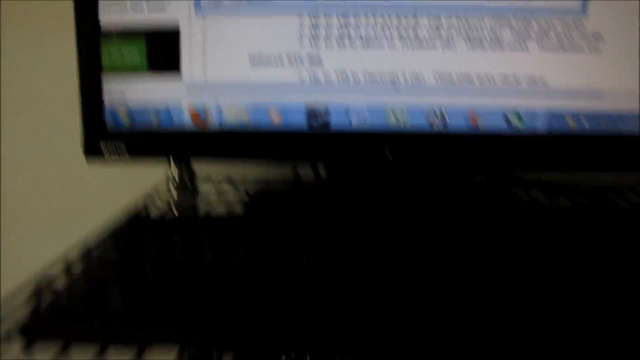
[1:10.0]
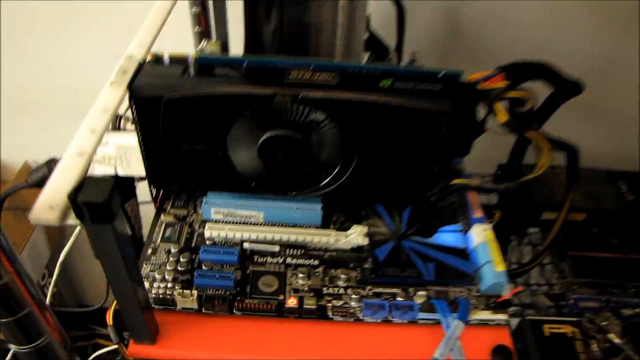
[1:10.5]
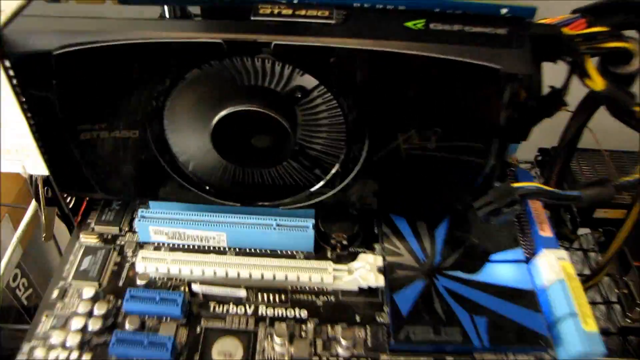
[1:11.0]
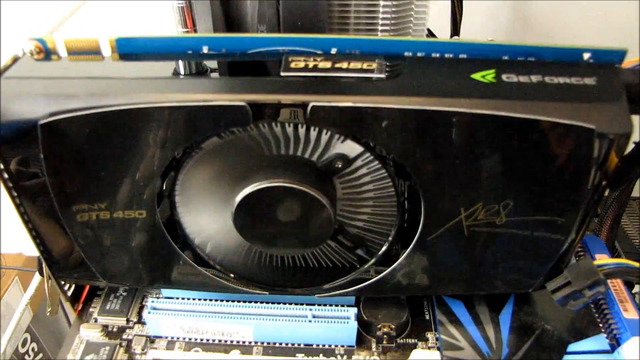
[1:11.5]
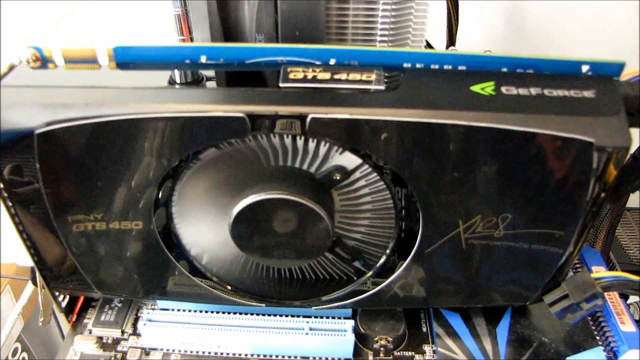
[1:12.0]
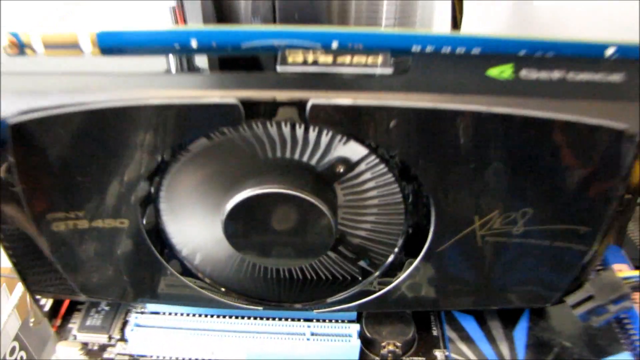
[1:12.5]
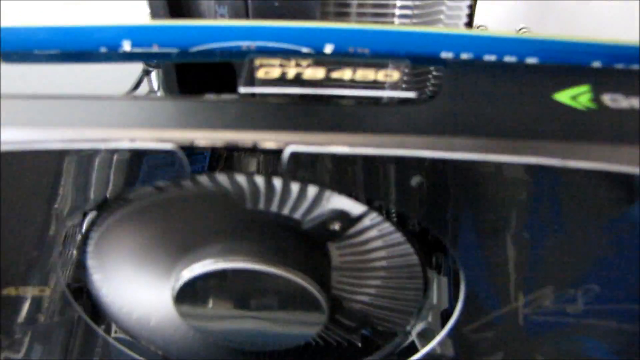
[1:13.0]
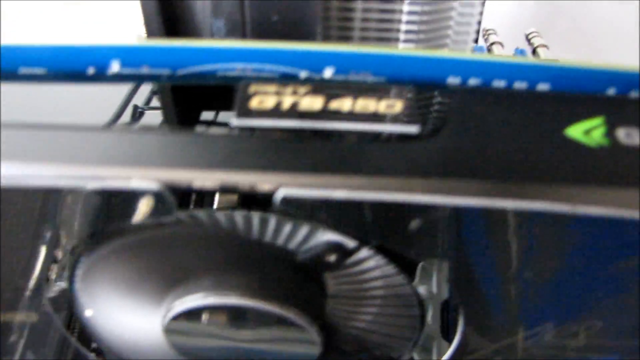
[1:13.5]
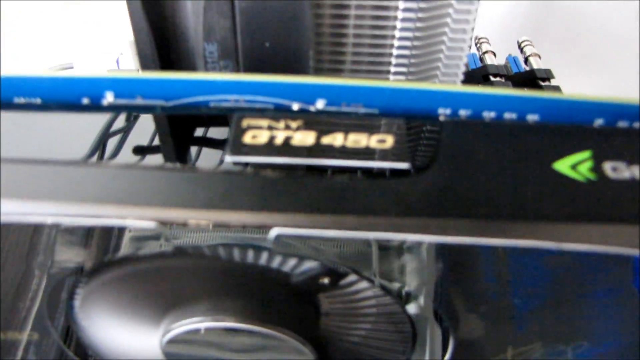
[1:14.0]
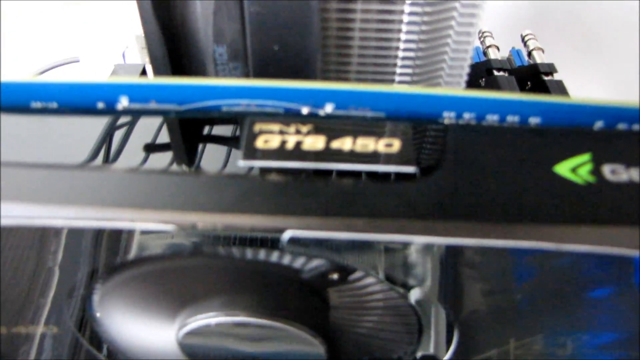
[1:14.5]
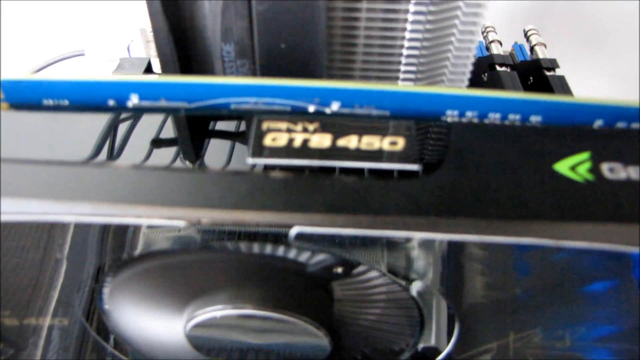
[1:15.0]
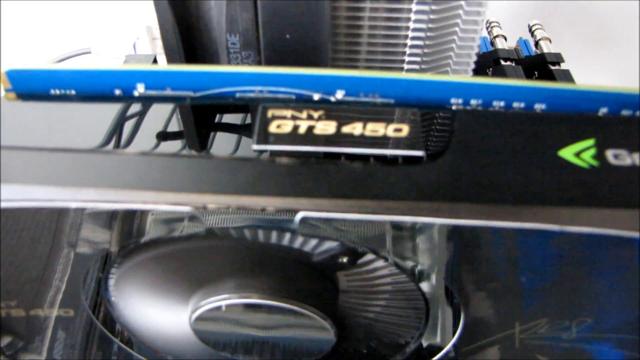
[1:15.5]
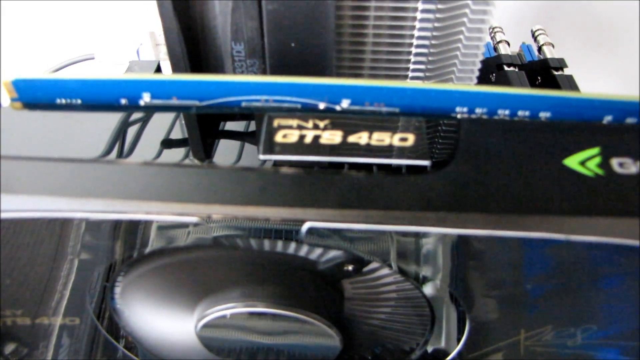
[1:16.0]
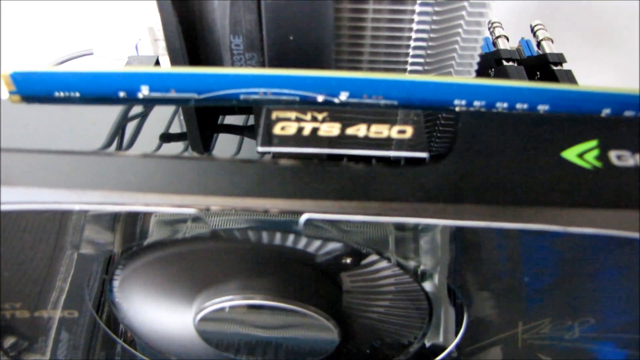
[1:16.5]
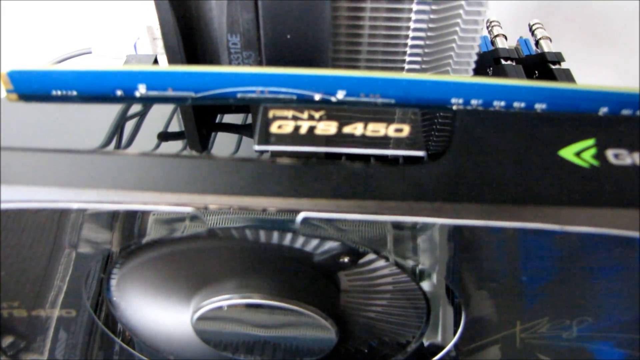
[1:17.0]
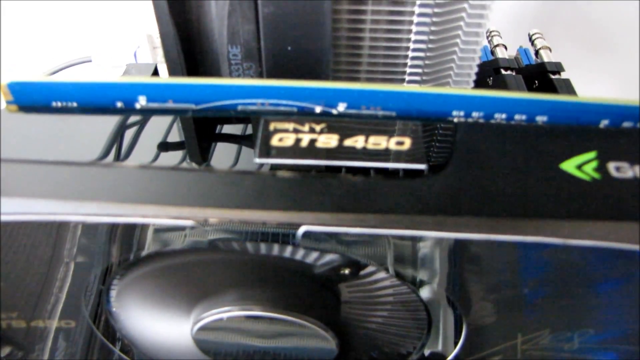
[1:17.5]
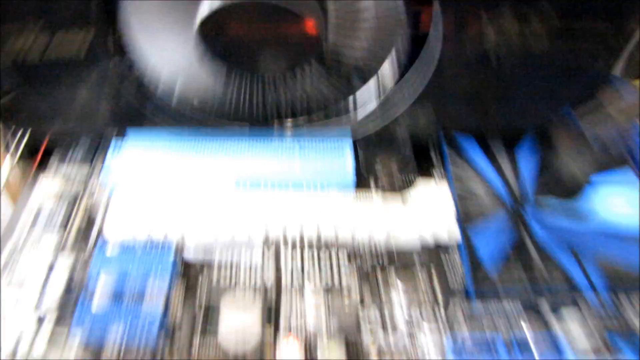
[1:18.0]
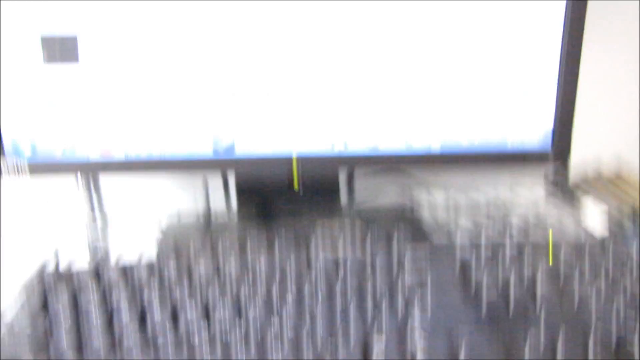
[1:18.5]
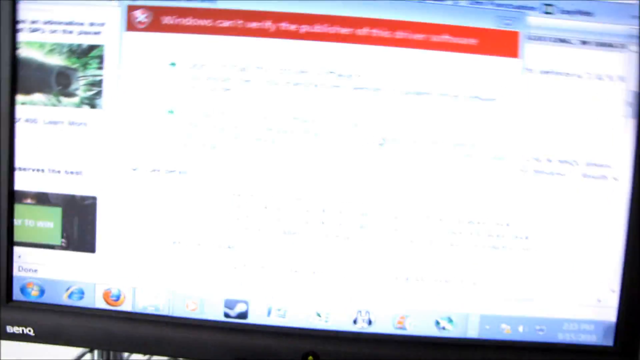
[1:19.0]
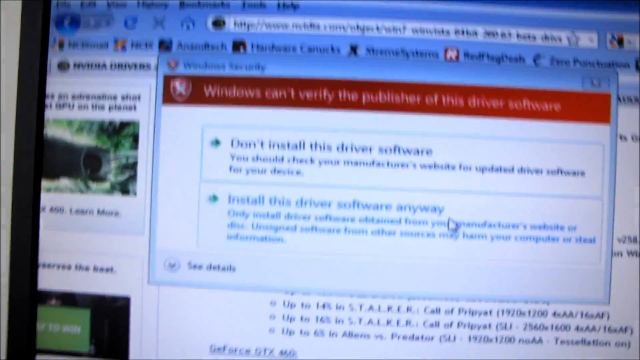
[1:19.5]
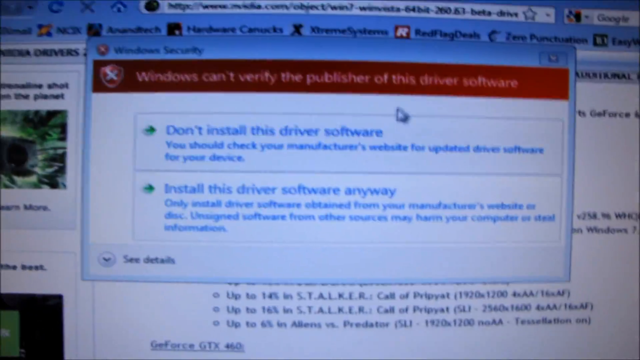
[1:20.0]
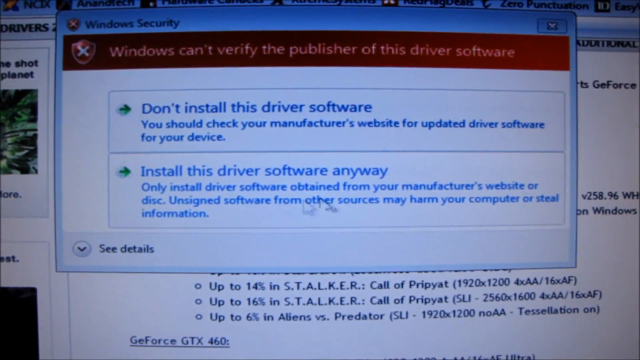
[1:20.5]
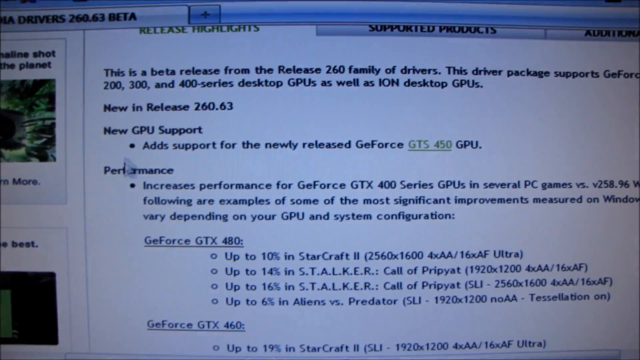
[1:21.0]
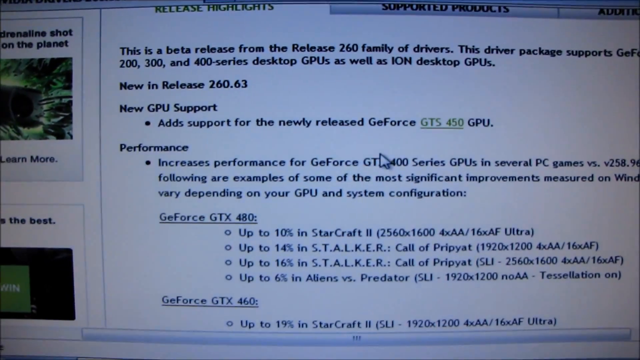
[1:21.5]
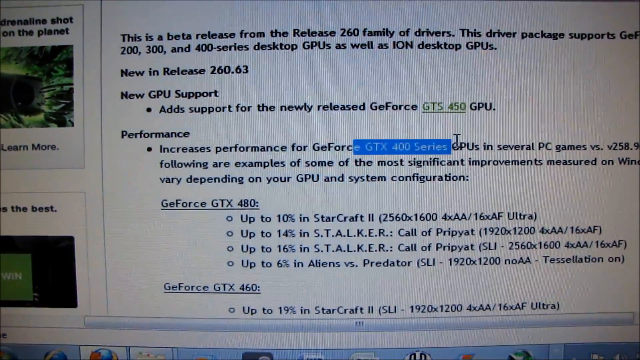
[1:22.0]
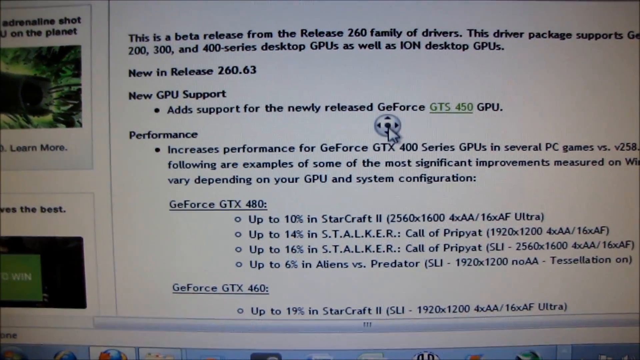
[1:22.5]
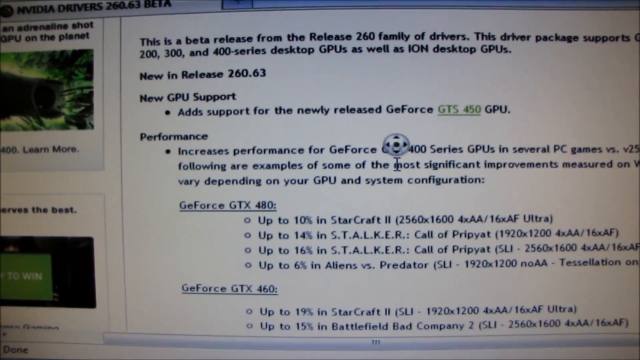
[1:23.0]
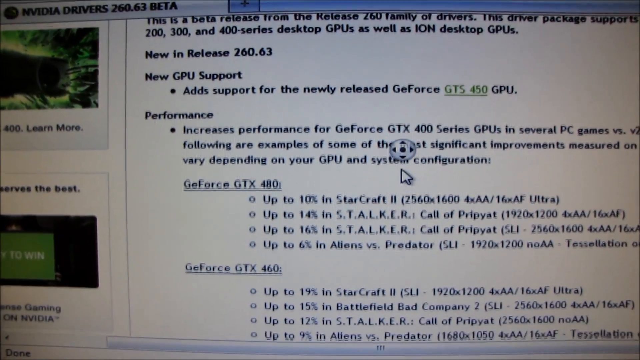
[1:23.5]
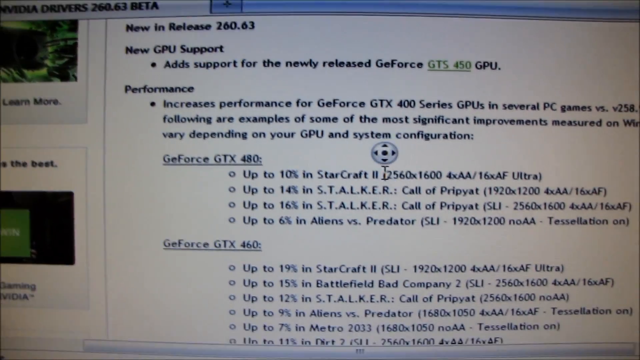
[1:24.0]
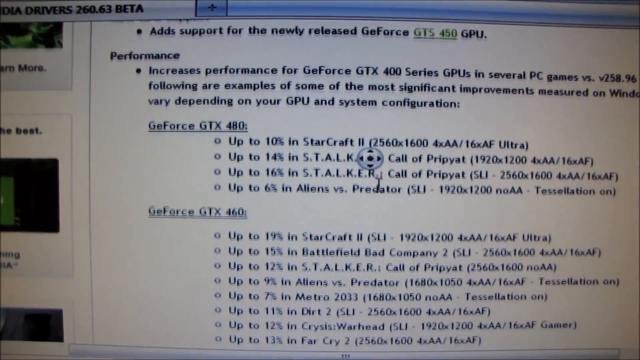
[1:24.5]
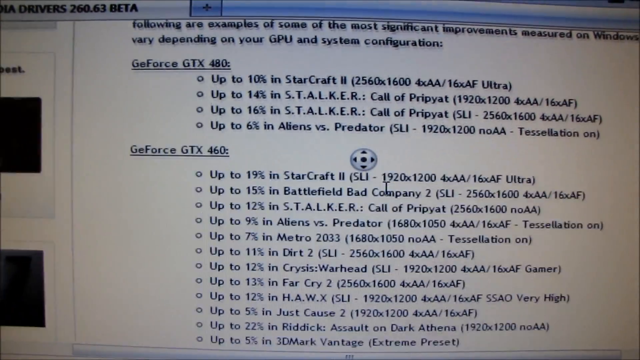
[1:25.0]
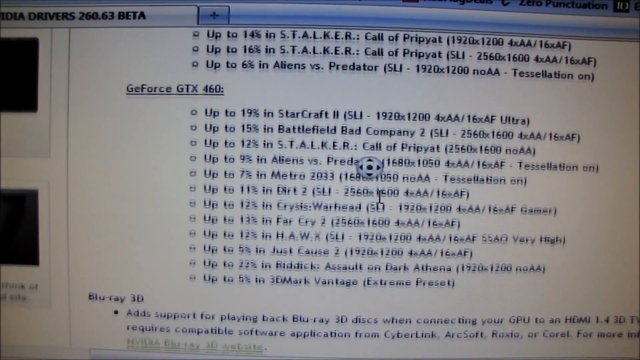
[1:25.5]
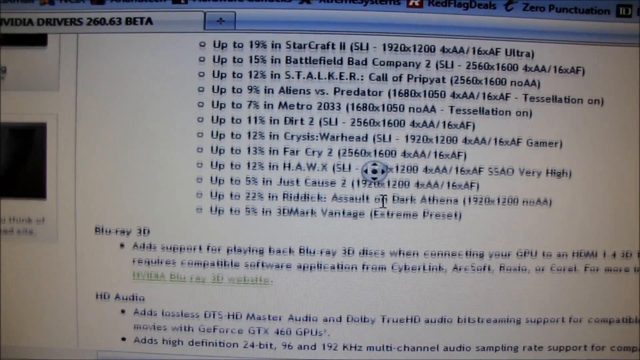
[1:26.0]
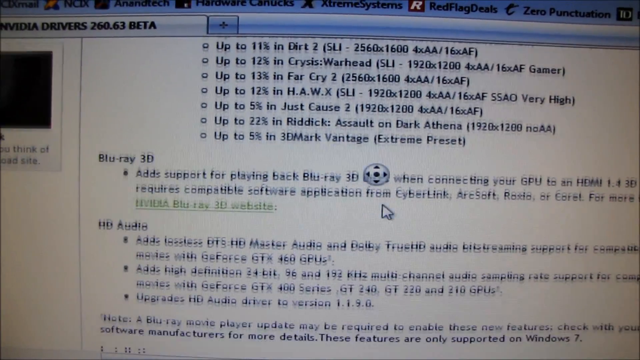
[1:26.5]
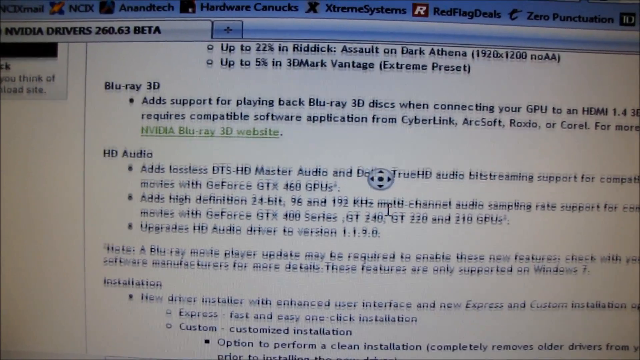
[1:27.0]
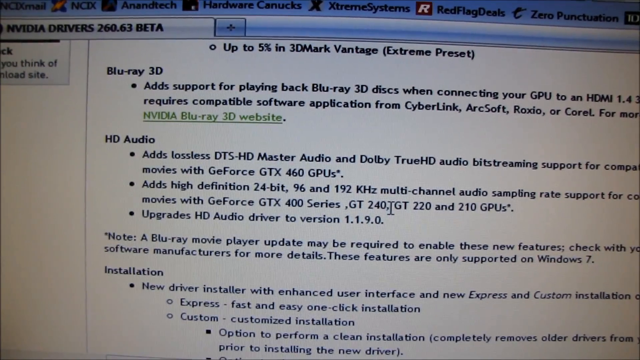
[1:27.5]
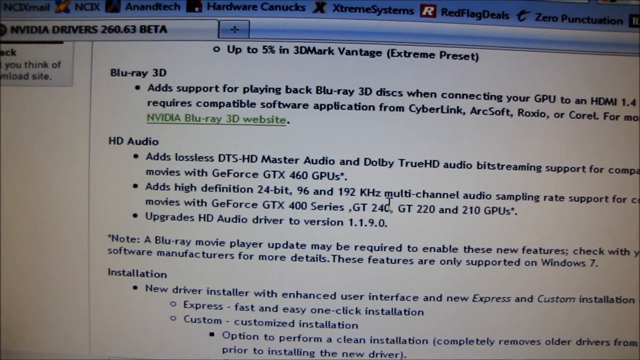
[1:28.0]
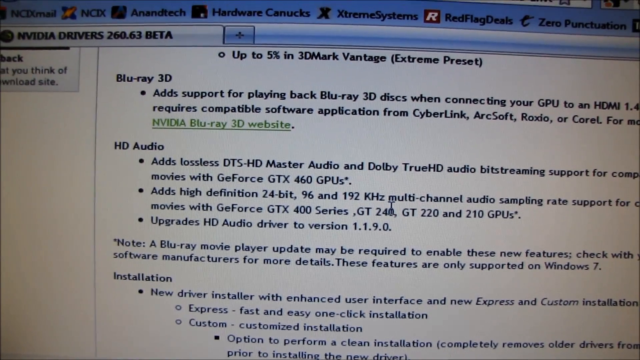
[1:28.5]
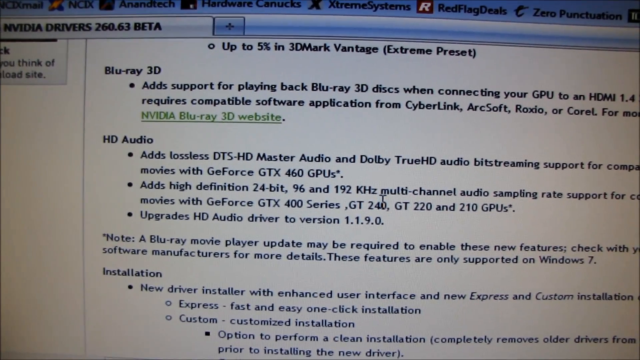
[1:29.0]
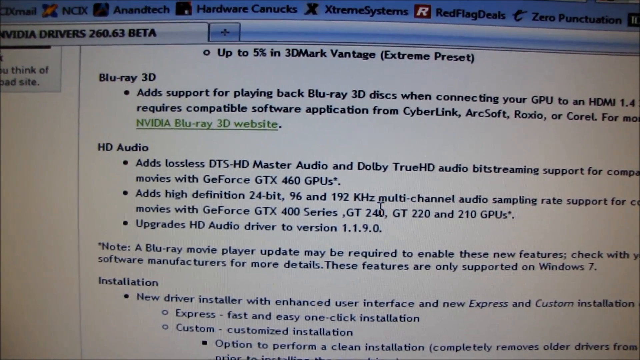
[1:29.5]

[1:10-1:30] The shot begins on the computer screen, then the camera immediately pans down below it to a piece of hardware: a black rectangular box with what looks like a fan on the outside, next to what looks like a circuit board with all sorts of things in front of it, and wires running from the box to the circuit board. The camera zooms in to reveal the label "GeForce GTS450", then zooms in and out repeatedly on the GTS450 number. The camera quickly returns to the computer screen, where a Windows security alert has appeared reading "Windows can't verify the publisher of this driver software", with the options "don't install" and "install it anyway". He clicks to install it anyway. Back on the website, he highlights the text "GTX400 series", then scrolls down further several times until he reaches a section on HD audio.